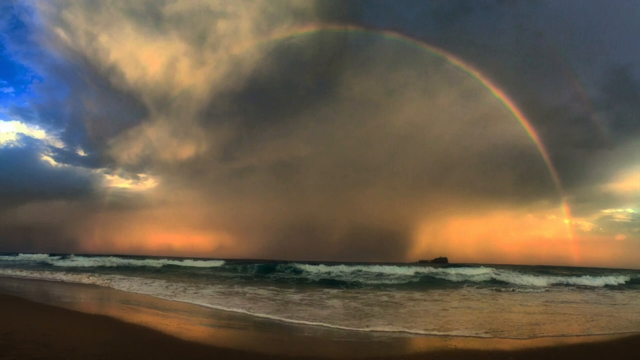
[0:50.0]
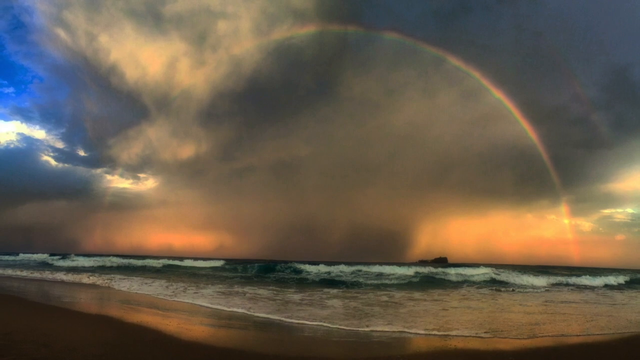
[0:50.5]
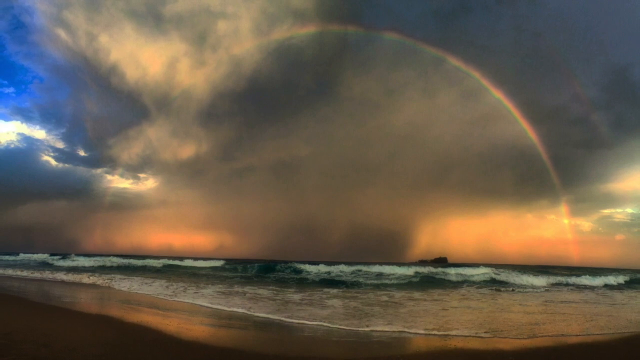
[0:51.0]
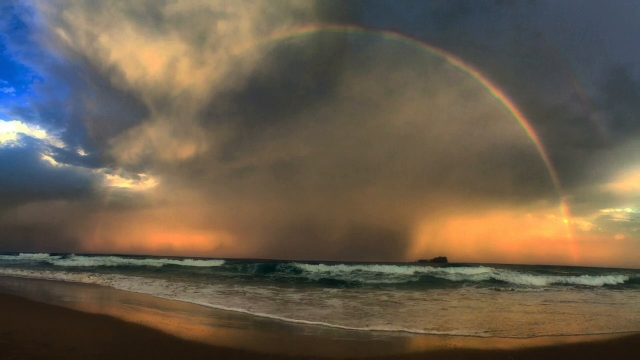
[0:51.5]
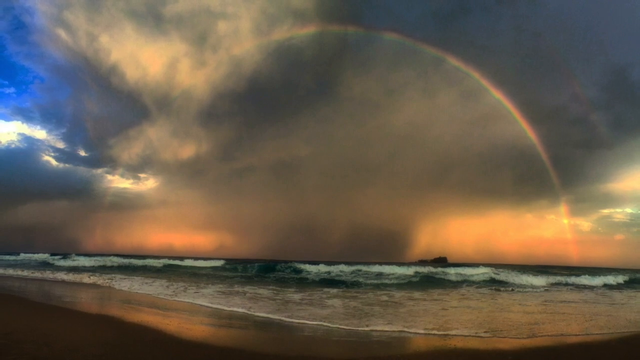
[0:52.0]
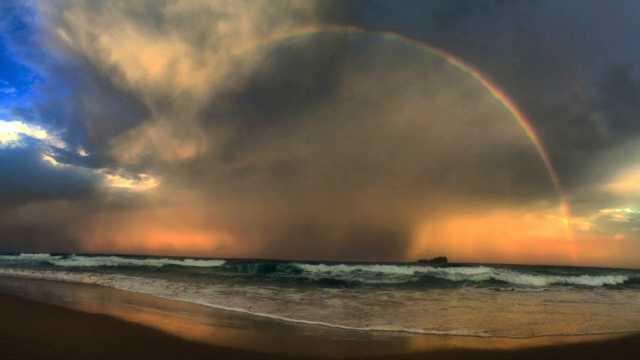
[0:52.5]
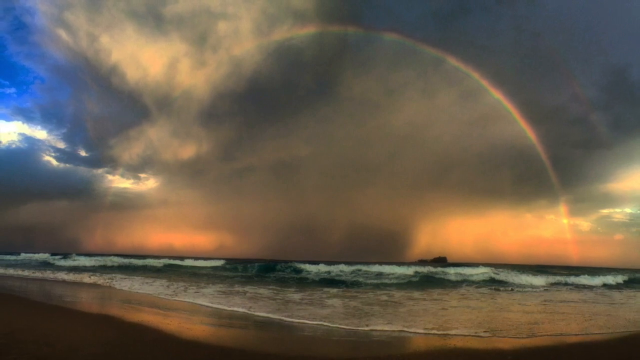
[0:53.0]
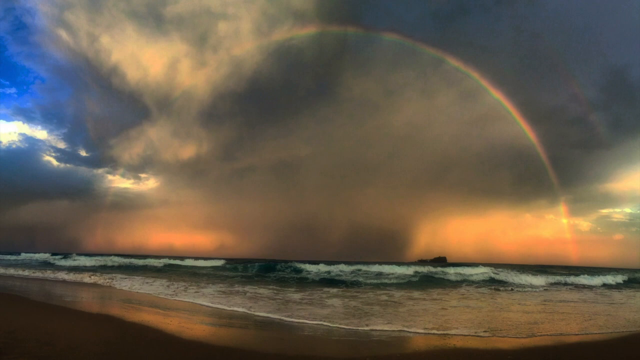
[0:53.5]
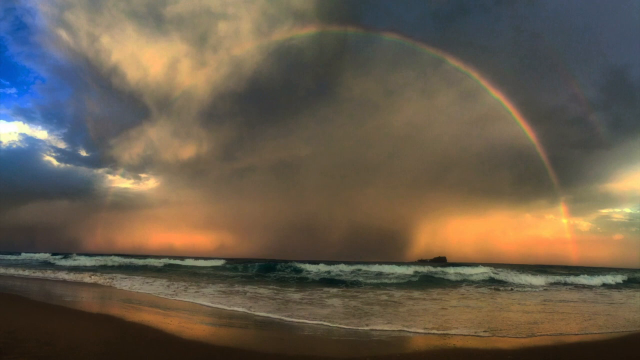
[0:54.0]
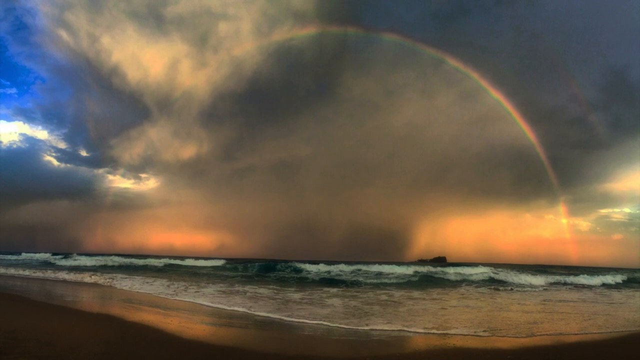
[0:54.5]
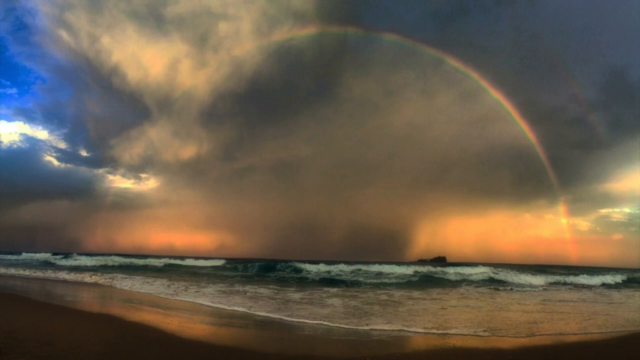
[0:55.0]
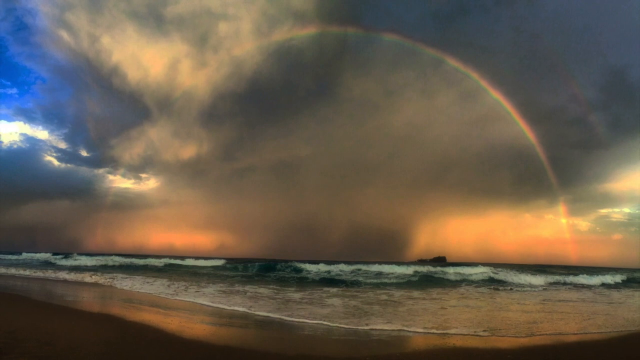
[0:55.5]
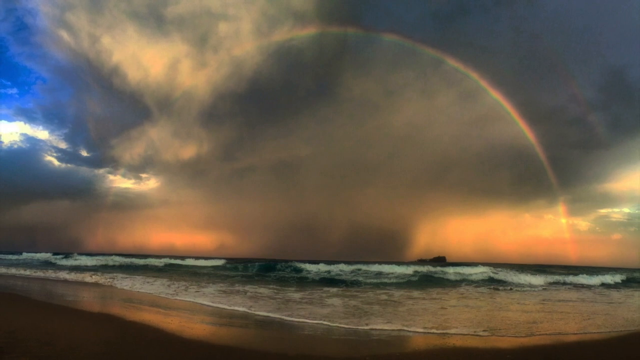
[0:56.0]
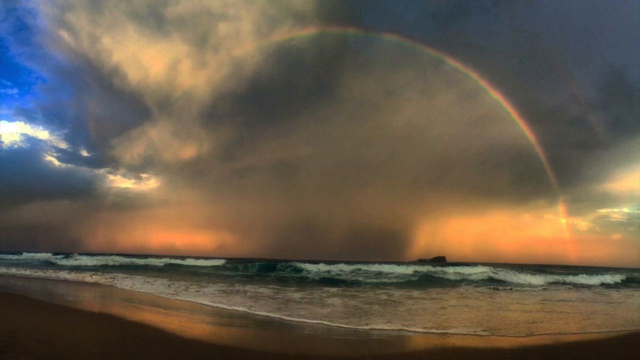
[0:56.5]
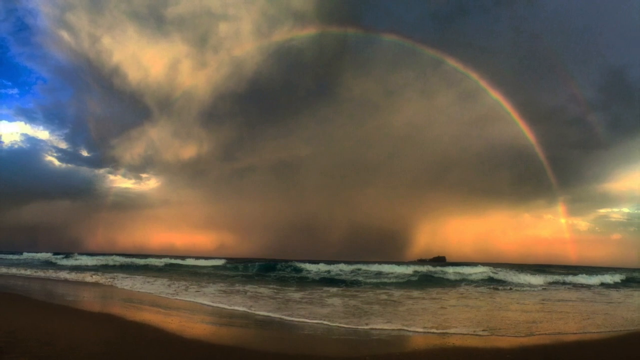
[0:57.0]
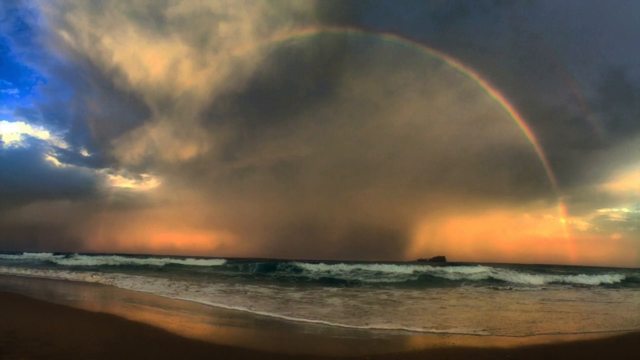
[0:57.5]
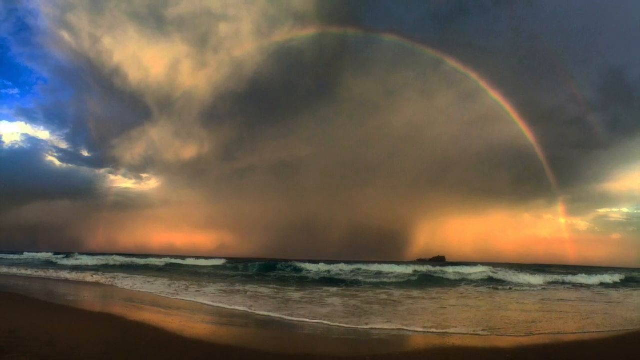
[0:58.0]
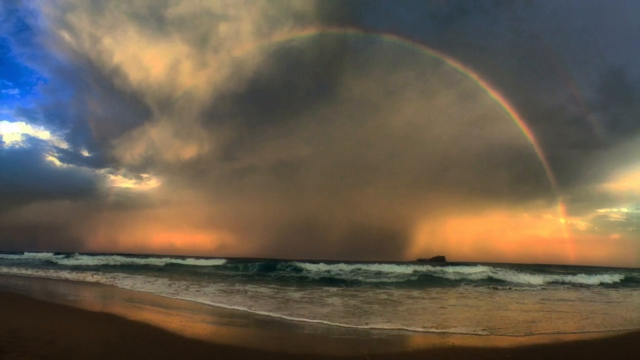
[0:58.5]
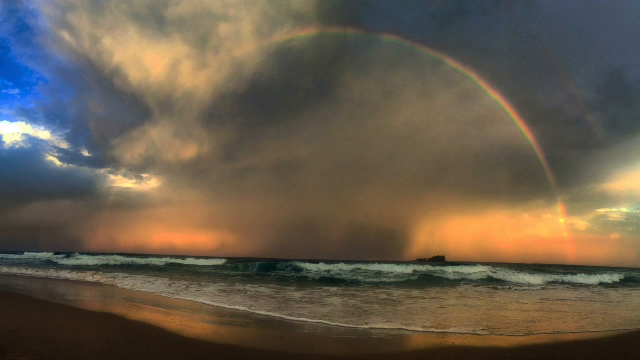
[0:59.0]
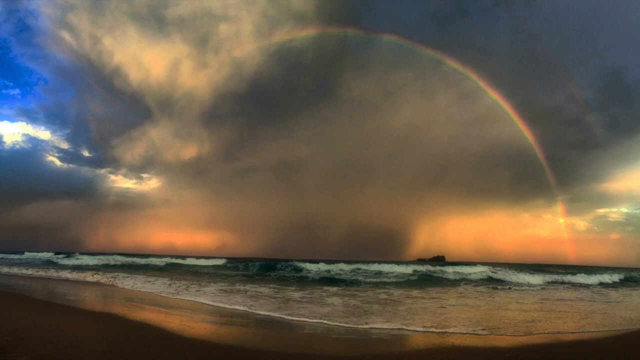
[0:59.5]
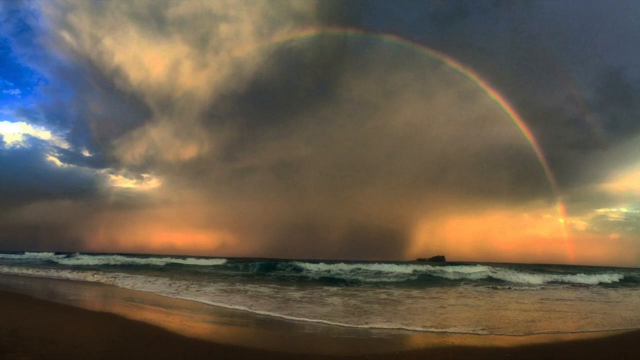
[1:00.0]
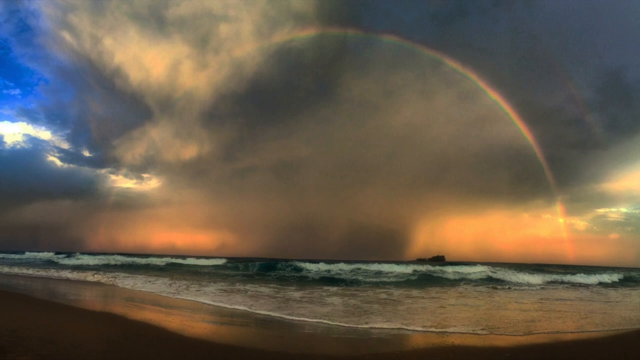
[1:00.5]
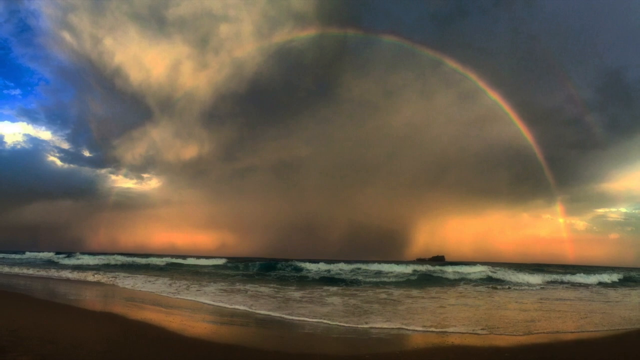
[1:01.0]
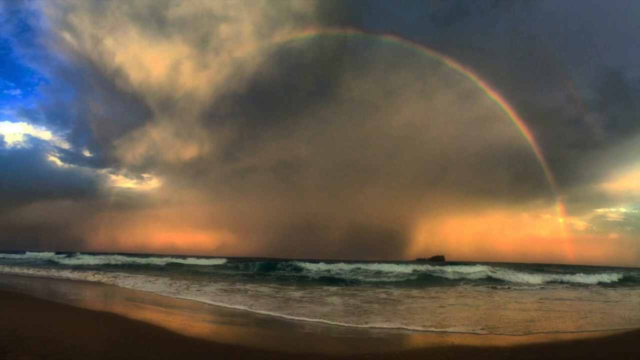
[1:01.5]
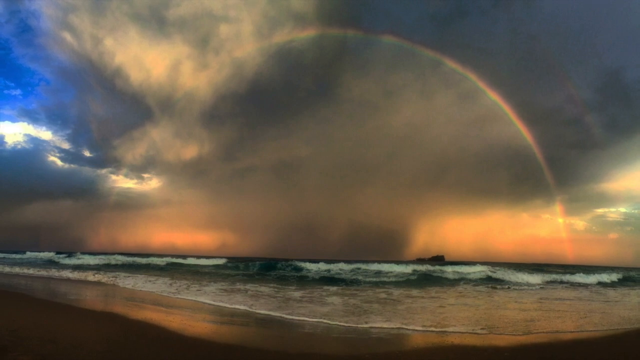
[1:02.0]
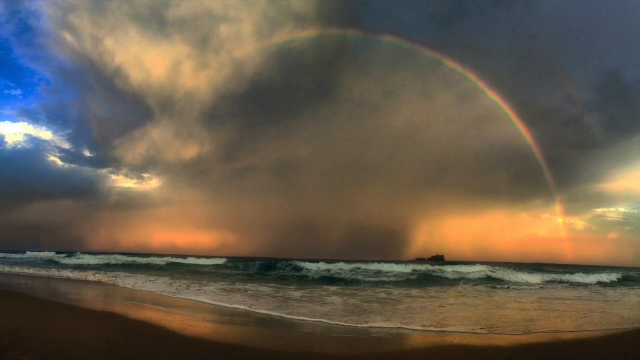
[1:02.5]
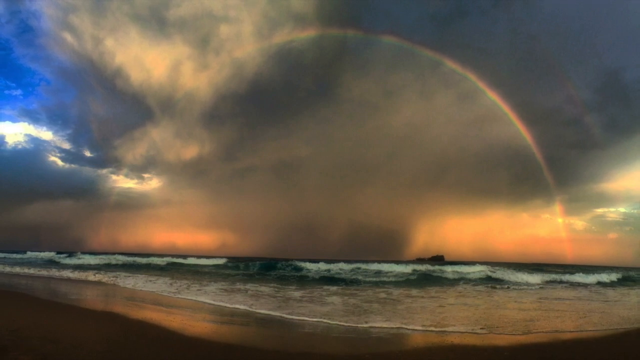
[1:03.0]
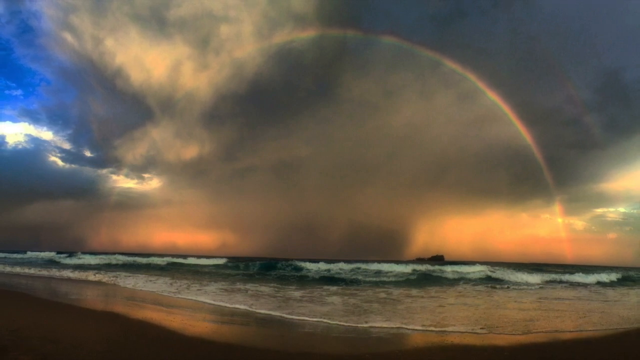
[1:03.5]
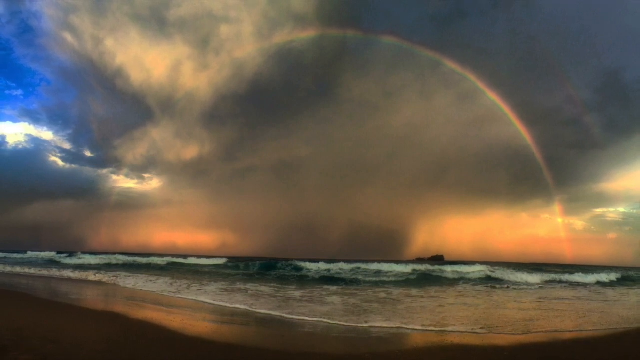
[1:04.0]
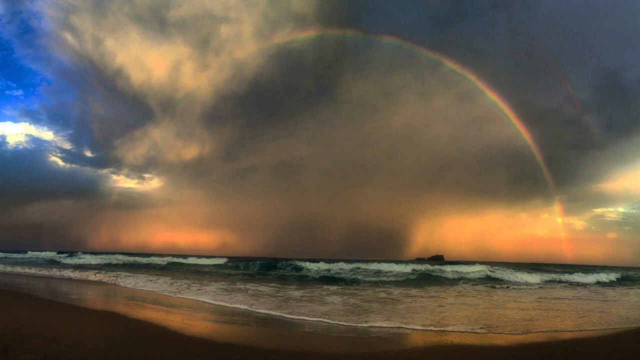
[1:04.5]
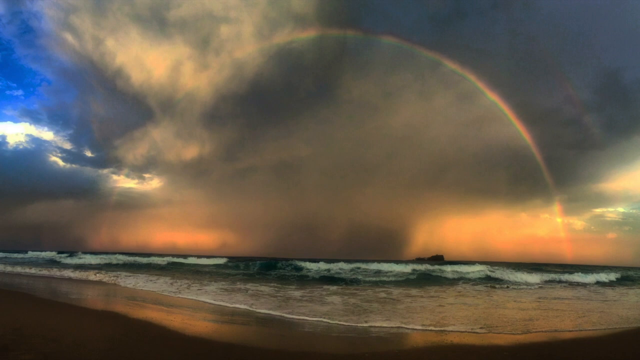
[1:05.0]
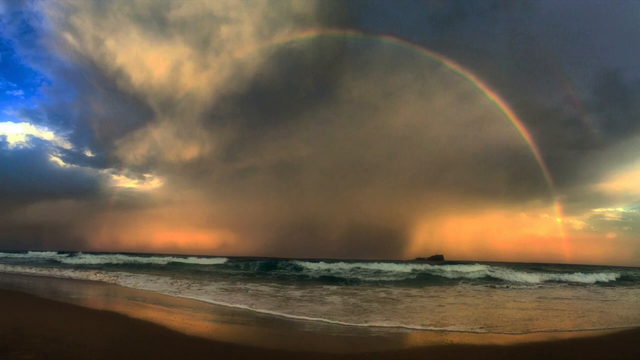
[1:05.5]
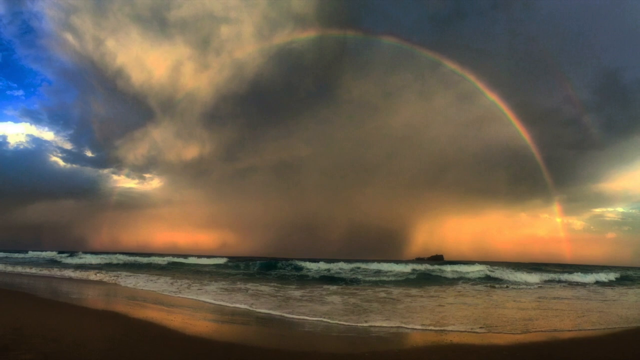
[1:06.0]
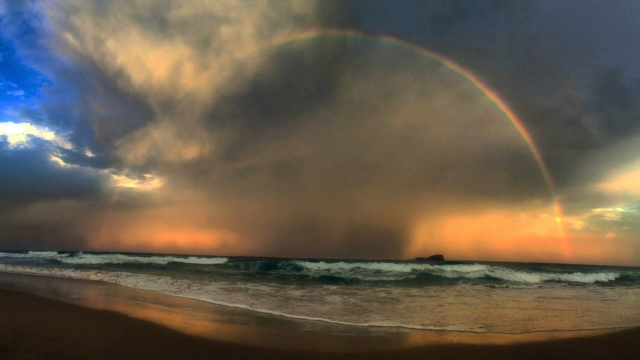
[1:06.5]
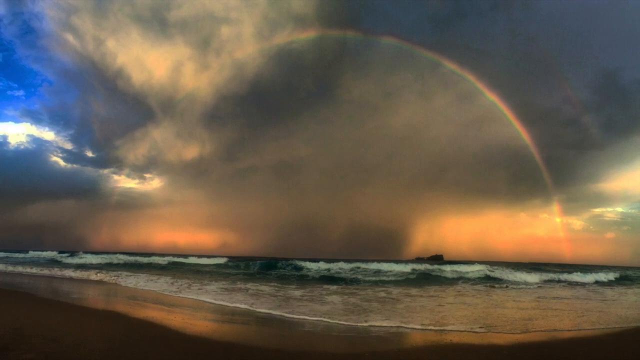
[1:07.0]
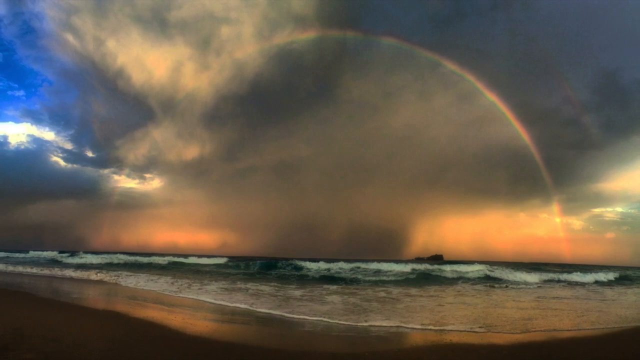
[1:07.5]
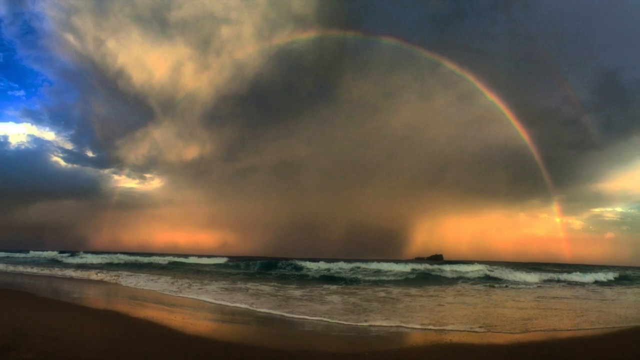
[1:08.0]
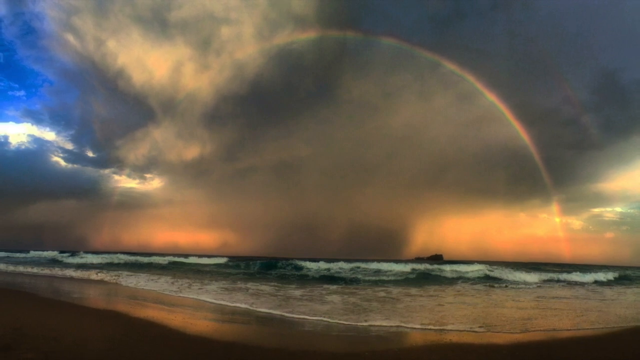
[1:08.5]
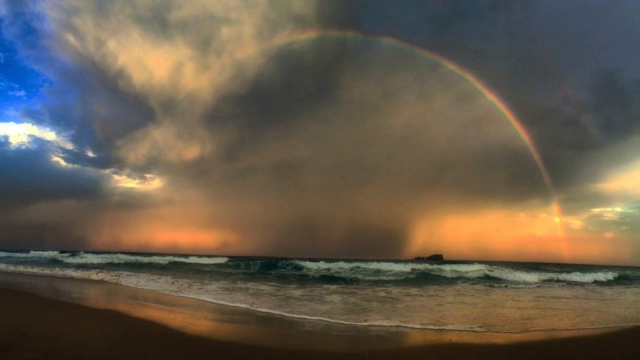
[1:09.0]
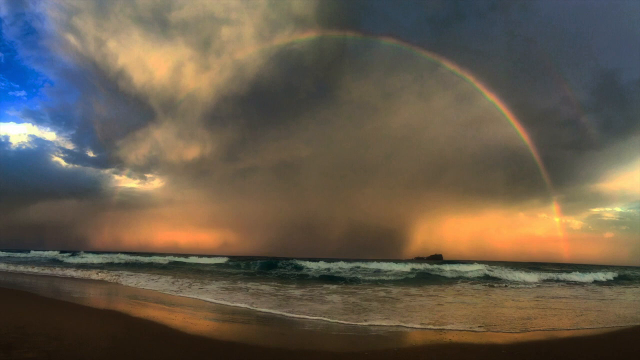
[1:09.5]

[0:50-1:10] A beach and the ocean. At the very front the sand is dark gray; further out, red from the setting sun is reflected on it. The tide is coming in, with shallow water near the front of the beach. A little further out, a wave is beginning to crest and break as it nears the shore, with white foam on its left and right sides. In the distance, a thick water spout rises from the ocean. At the horizon on either side of it the sky is red, orange and pale green. A large area of gray and white clouds rises above the water spout. In the upper left-hand corner there is blue sky, with white clouds illuminated by the sun behind them. A rainbow in a perfect arc spreads end to end across the horizon, touching the ocean at the horizon on both sides.